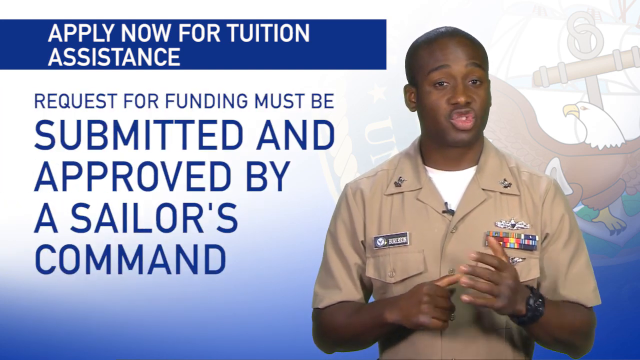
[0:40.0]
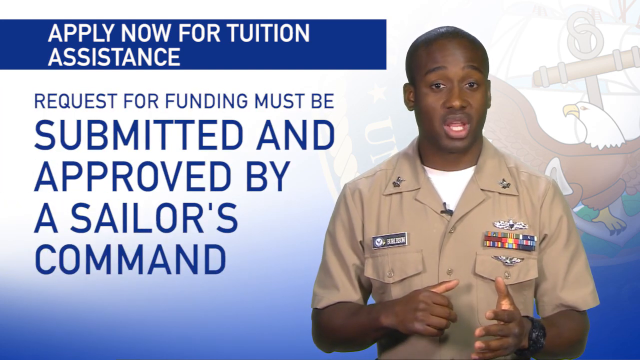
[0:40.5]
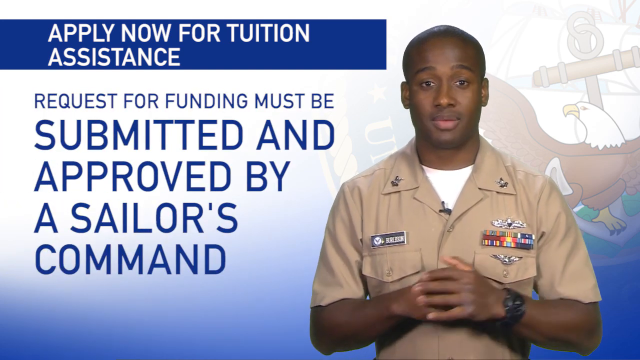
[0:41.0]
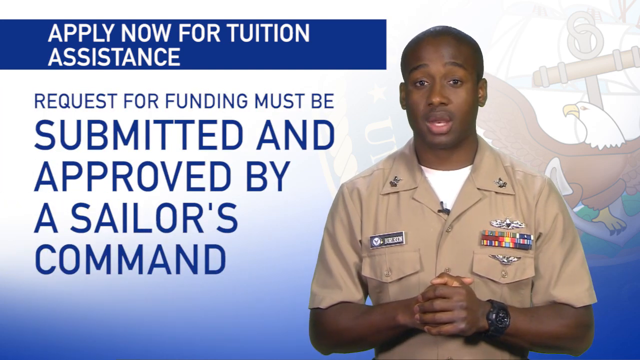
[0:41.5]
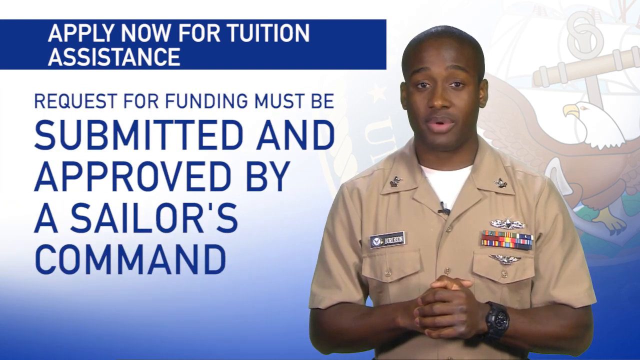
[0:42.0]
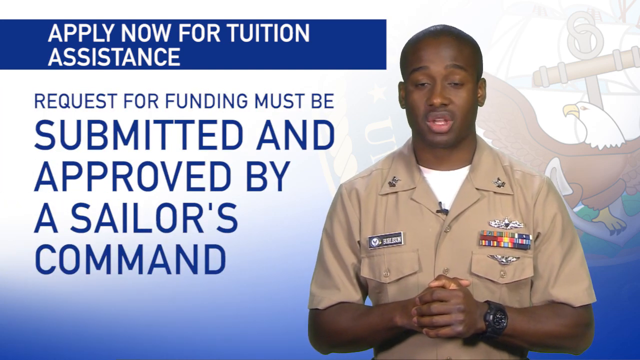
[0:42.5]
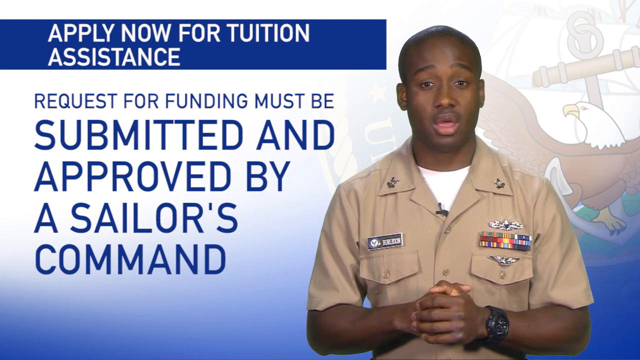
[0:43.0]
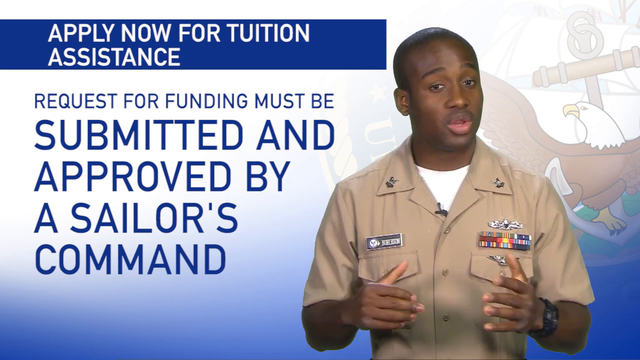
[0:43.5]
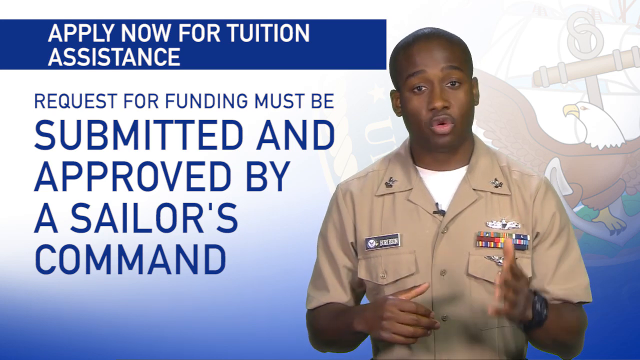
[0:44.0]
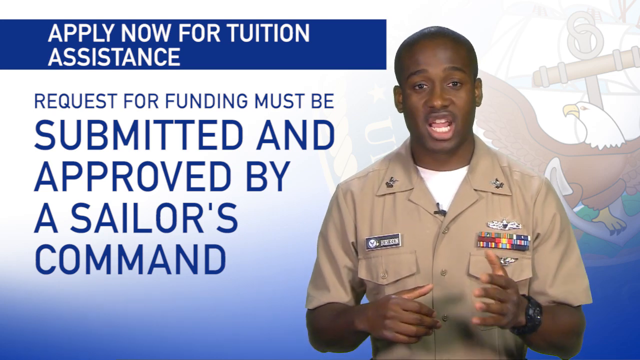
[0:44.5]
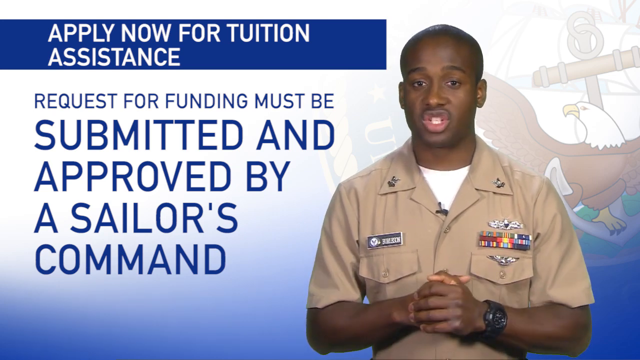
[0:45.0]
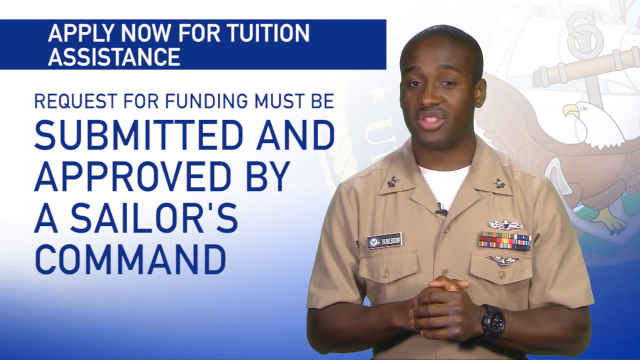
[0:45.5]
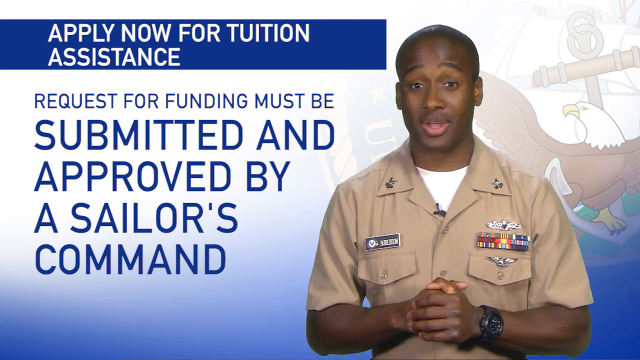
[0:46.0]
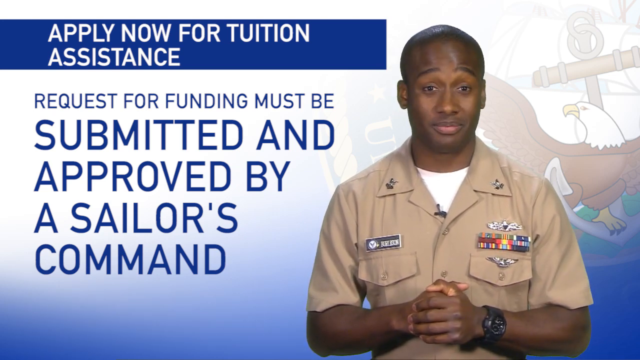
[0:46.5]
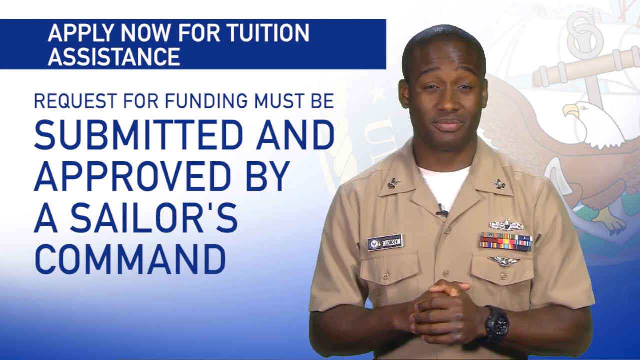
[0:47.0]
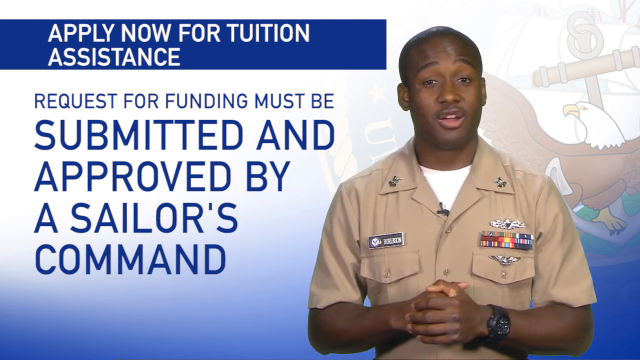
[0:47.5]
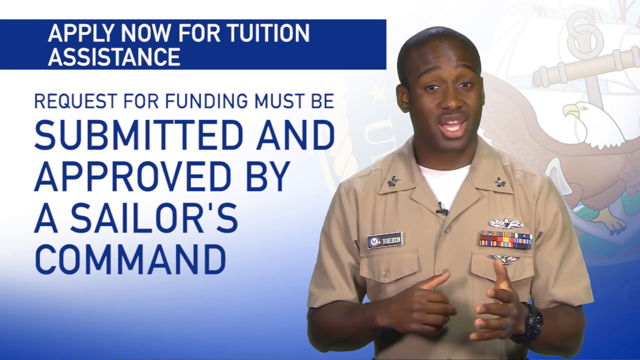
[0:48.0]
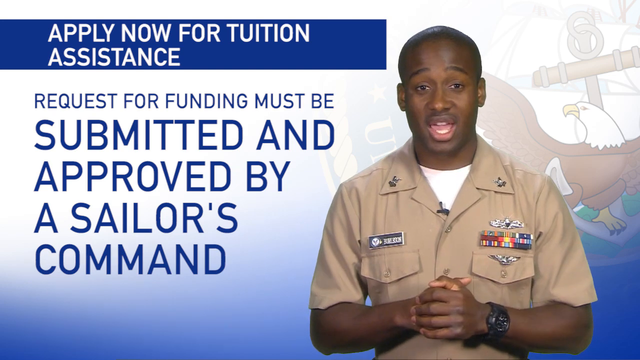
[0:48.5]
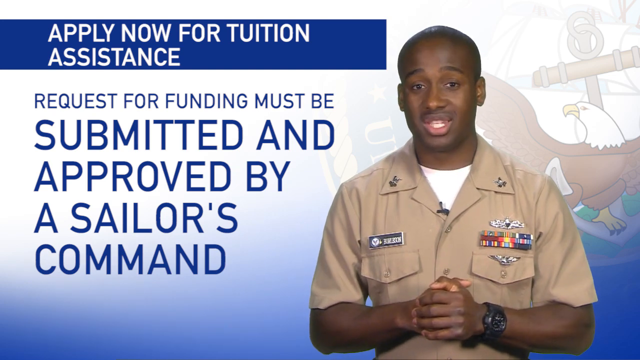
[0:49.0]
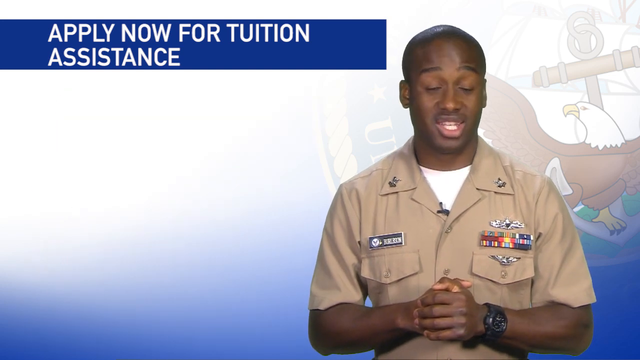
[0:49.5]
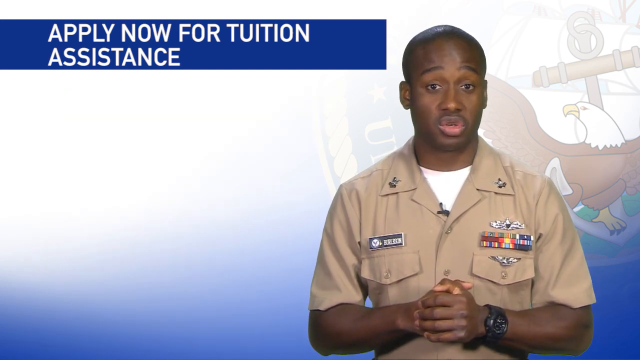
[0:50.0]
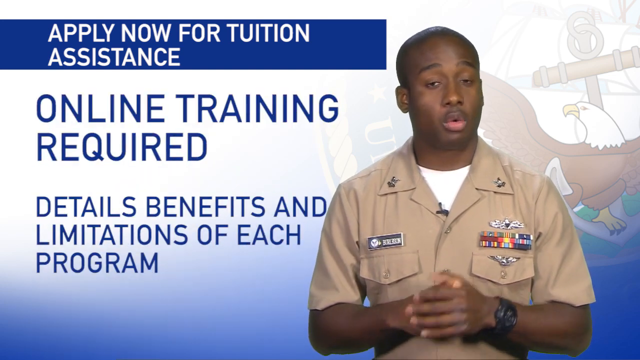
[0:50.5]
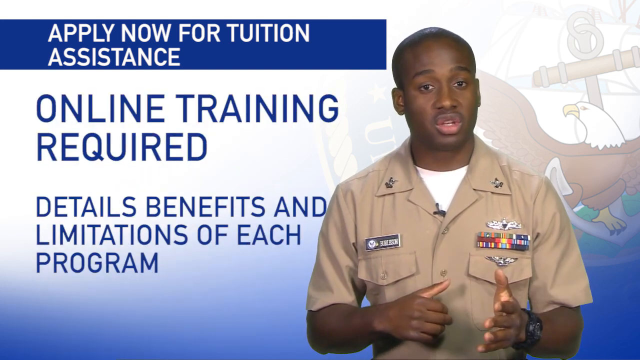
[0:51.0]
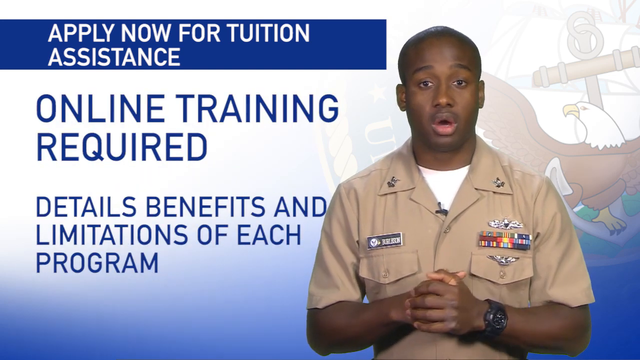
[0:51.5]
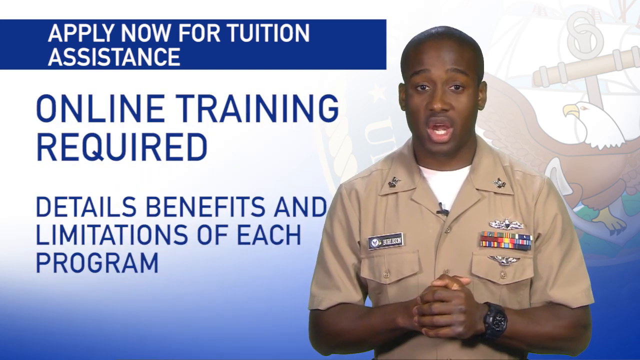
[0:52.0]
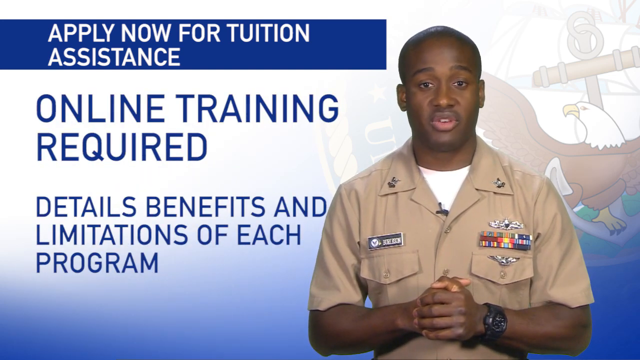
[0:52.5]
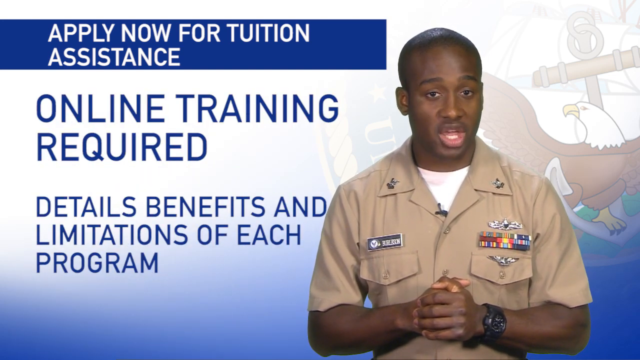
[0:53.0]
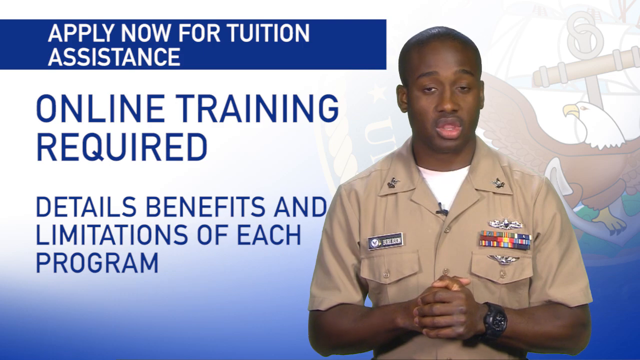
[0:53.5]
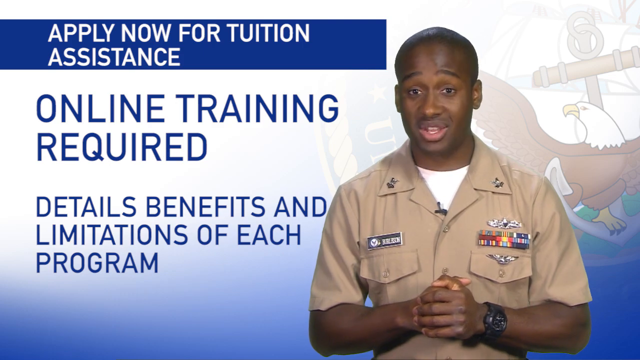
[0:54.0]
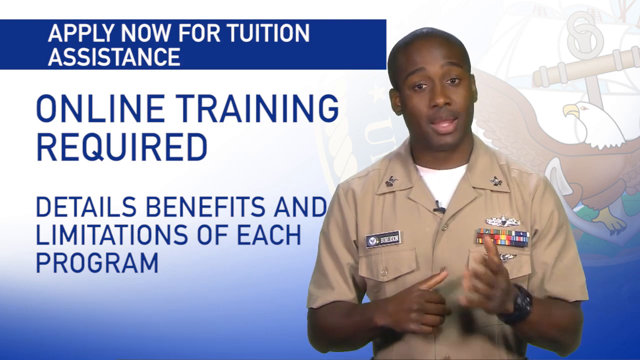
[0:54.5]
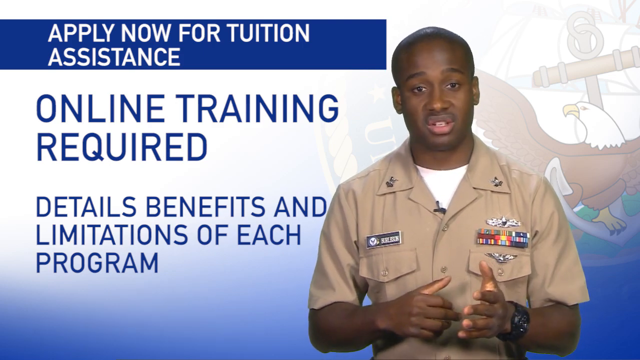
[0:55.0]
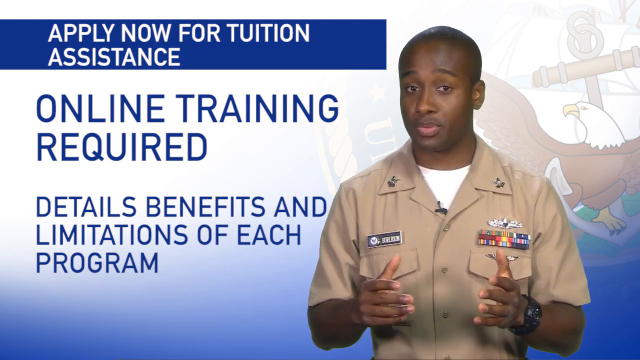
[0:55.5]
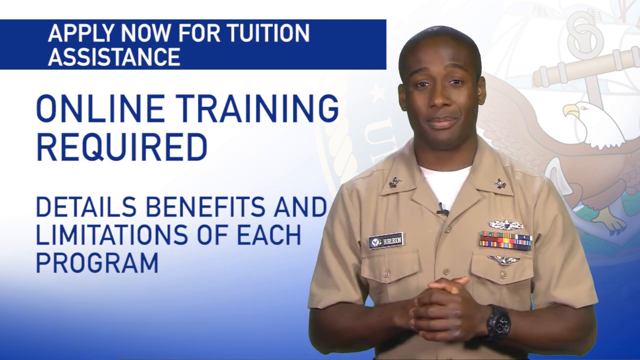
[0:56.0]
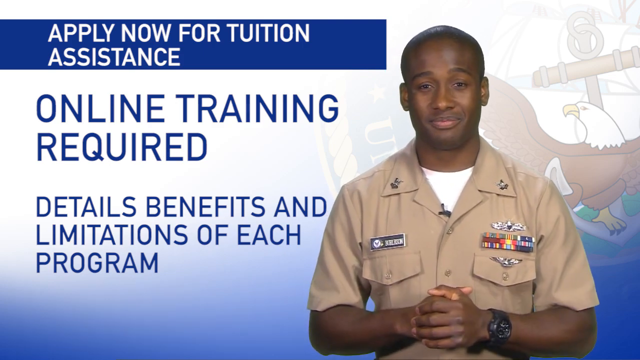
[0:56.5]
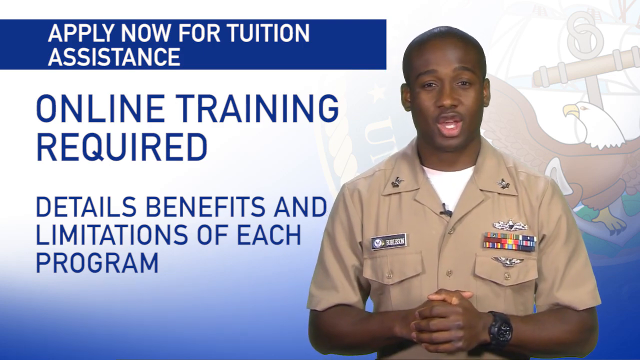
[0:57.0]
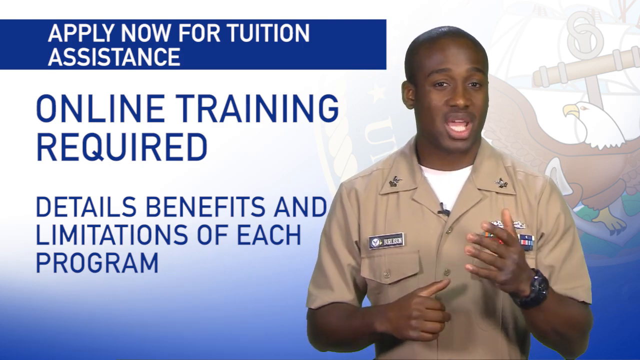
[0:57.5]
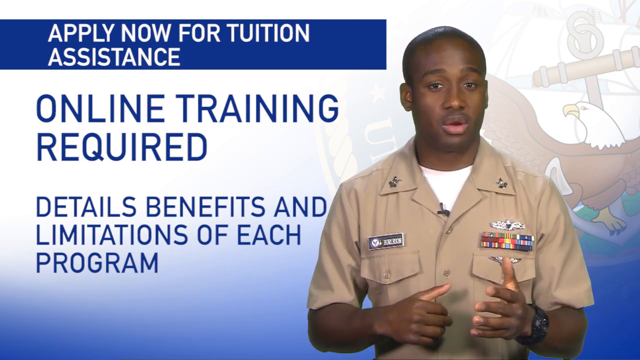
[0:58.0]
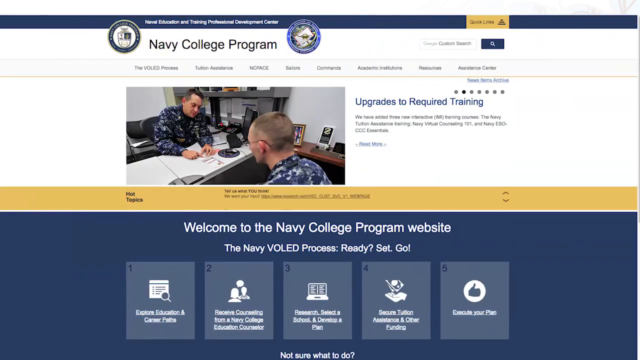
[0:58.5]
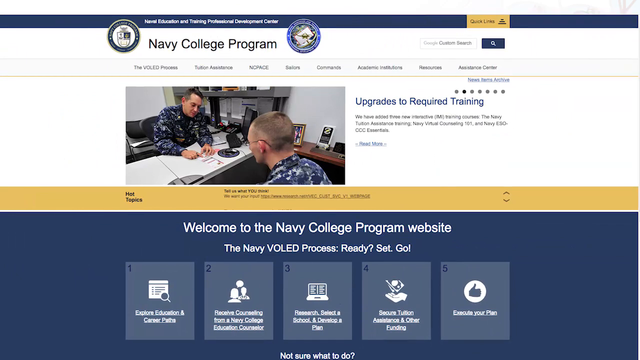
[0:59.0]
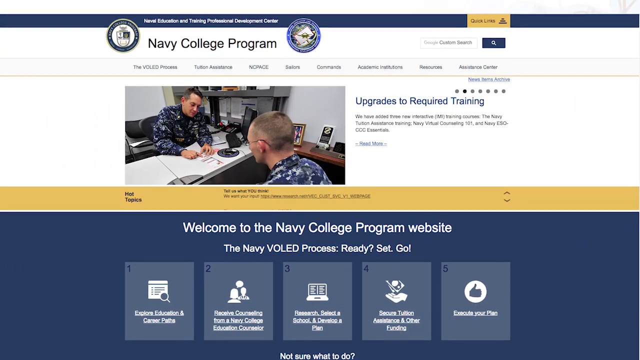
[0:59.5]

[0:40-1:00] Text on the left side reads "request for funding must be submitted and approved by a Sailor's Command," followed by "Online training required" and "Details, benefits, and limitations of each program." A web page then appears that says "Navy College Program," with many clickable text items that are slightly blurry. On the right side it says "Upgrade to require training." On the left side are two people in camouflage Navy uniforms: one in the office is writing something on a white piece of paper, and the other is attending to that person. Along the bottom the text says "Welcome to the Navy College Program website," "The Navy VOLED process" and "Ready? Set. Go."